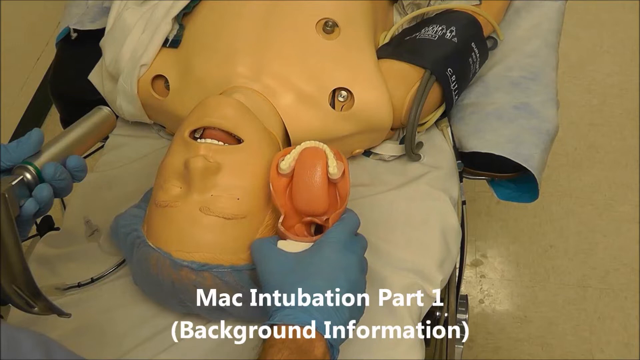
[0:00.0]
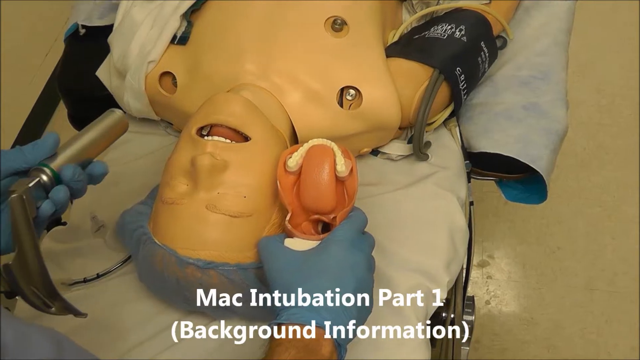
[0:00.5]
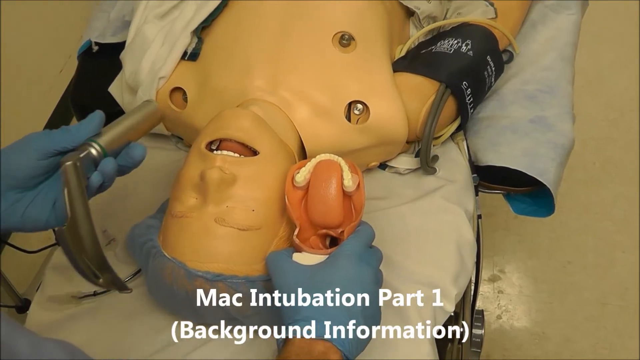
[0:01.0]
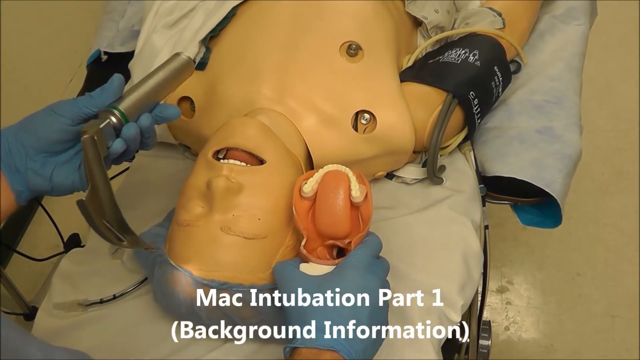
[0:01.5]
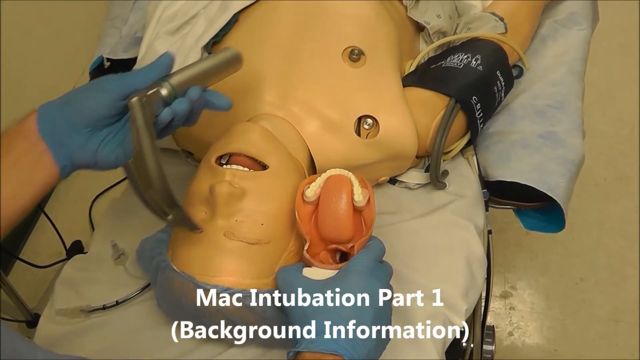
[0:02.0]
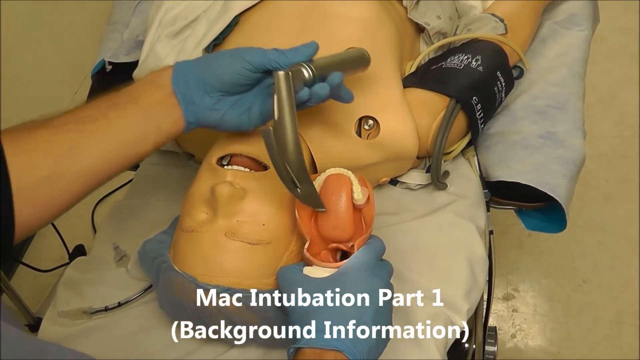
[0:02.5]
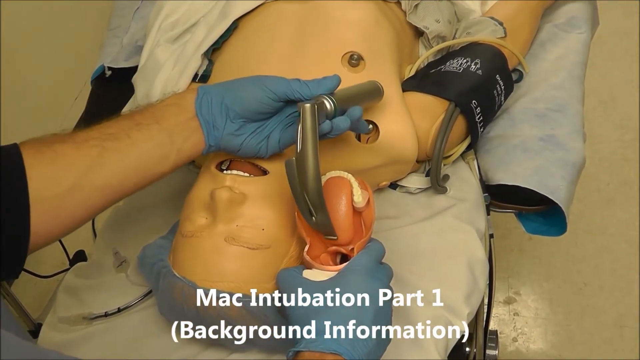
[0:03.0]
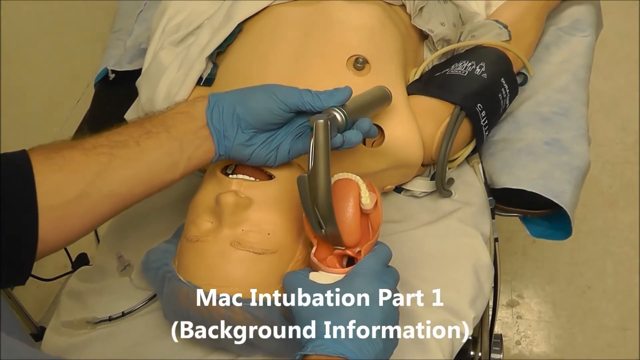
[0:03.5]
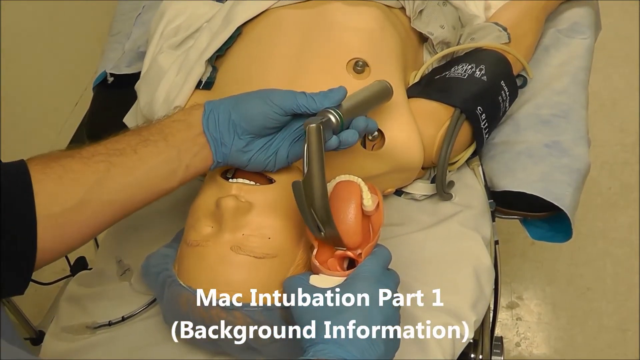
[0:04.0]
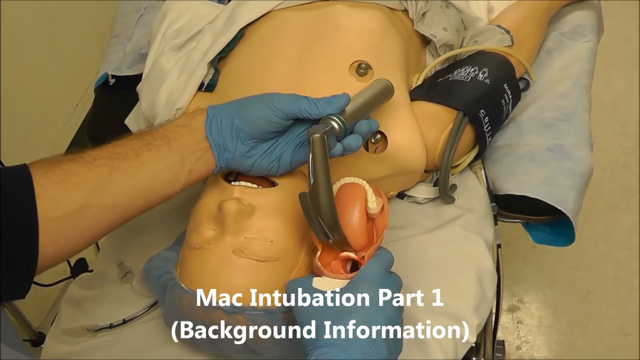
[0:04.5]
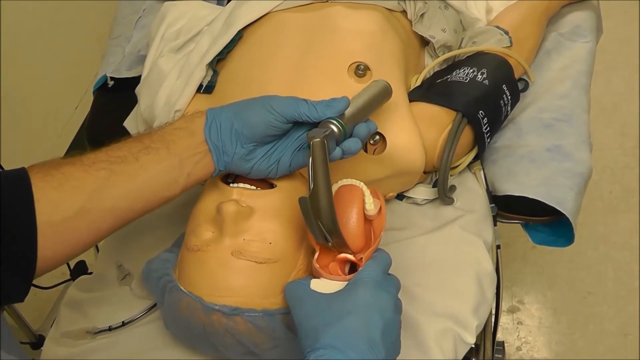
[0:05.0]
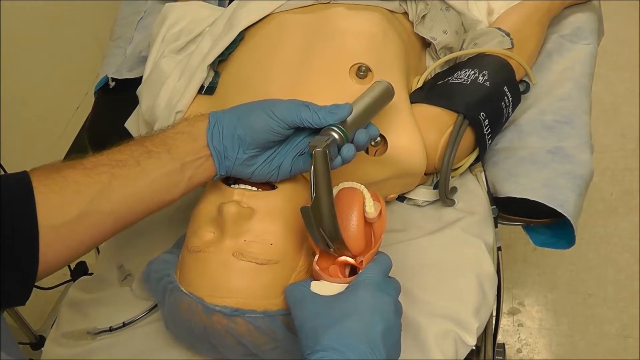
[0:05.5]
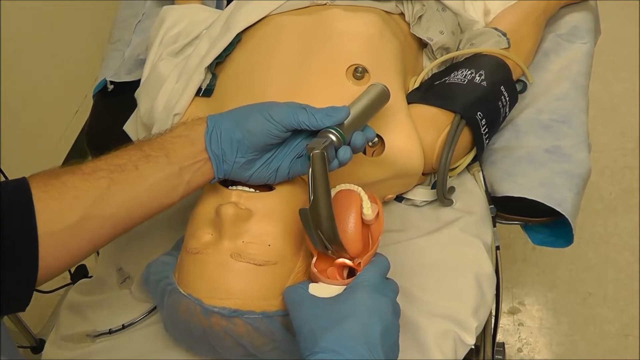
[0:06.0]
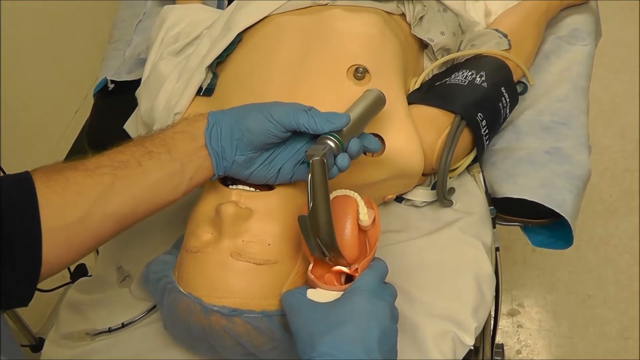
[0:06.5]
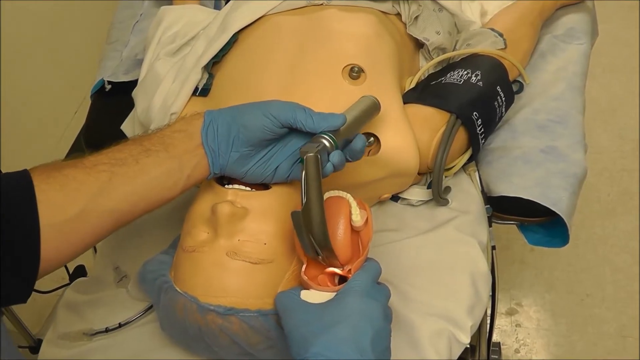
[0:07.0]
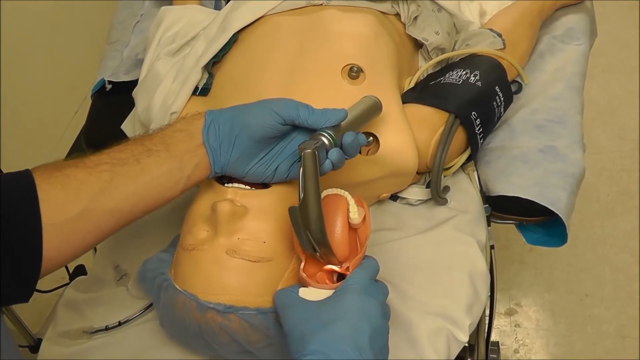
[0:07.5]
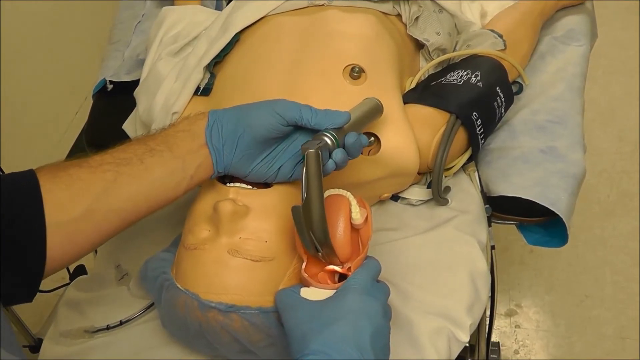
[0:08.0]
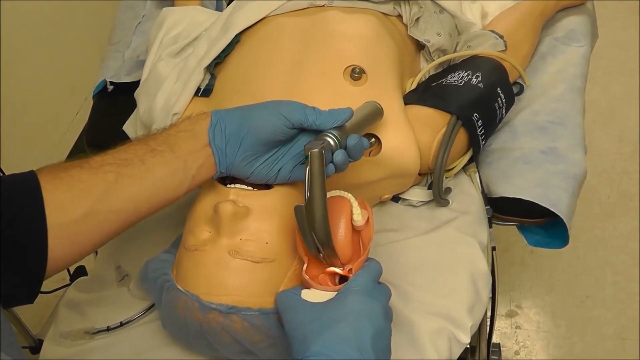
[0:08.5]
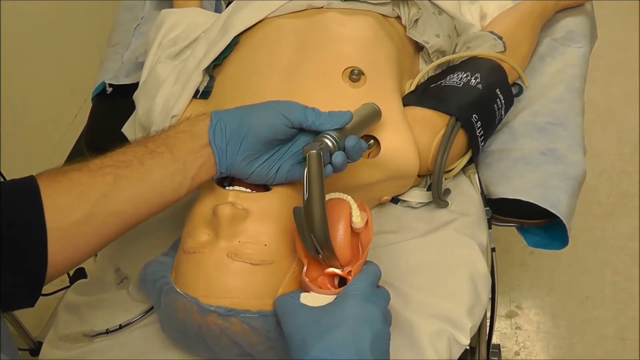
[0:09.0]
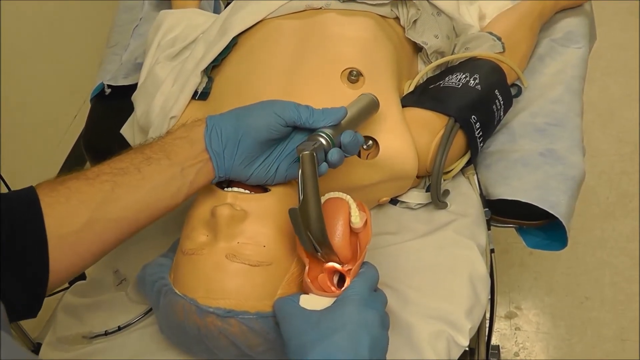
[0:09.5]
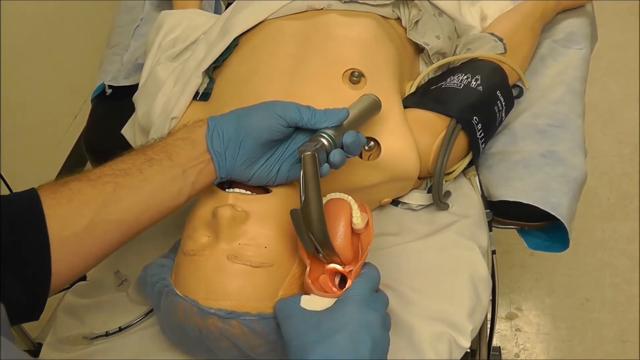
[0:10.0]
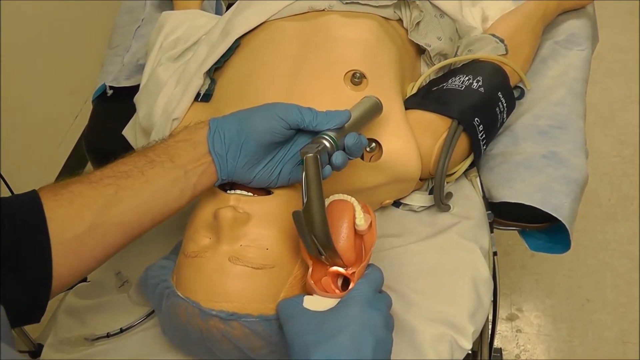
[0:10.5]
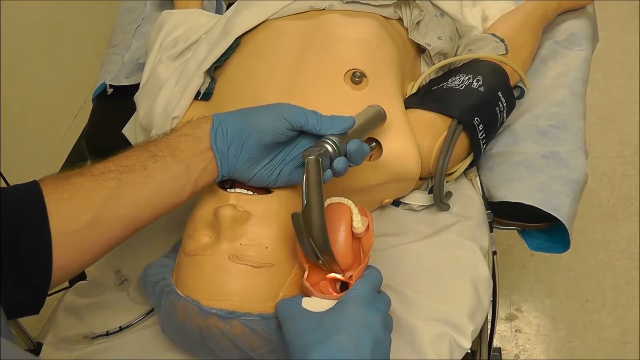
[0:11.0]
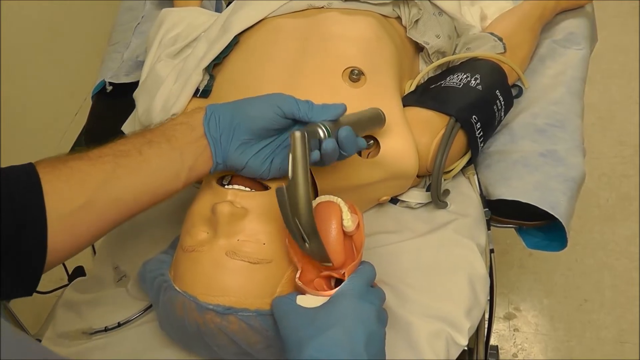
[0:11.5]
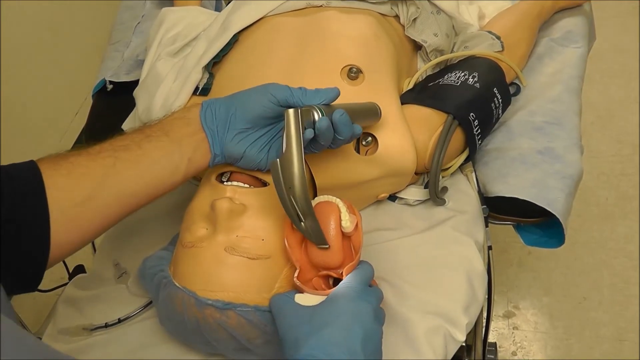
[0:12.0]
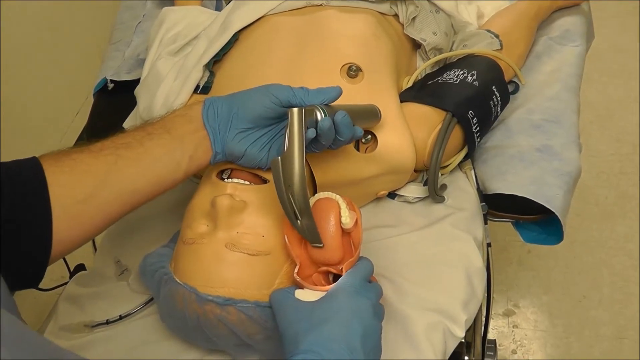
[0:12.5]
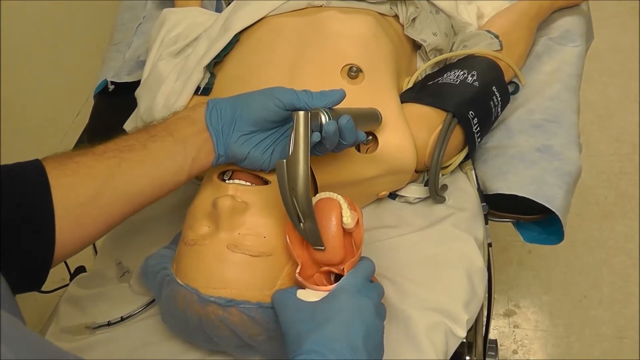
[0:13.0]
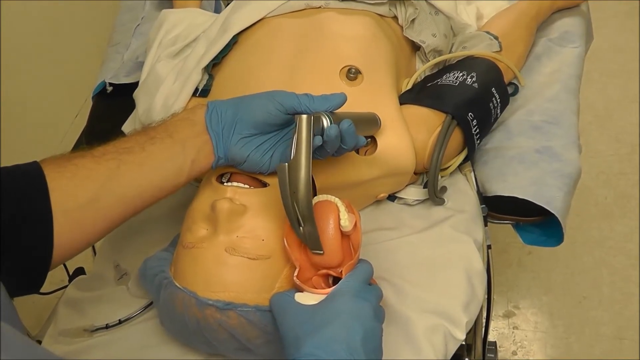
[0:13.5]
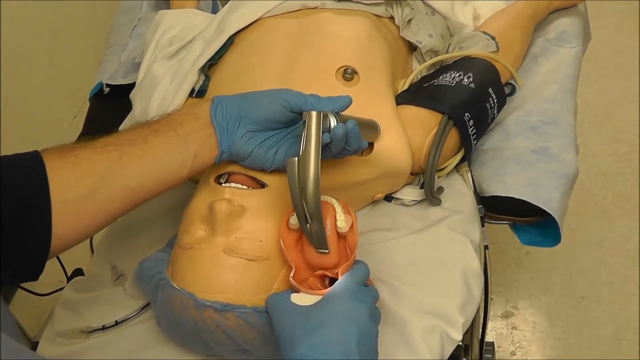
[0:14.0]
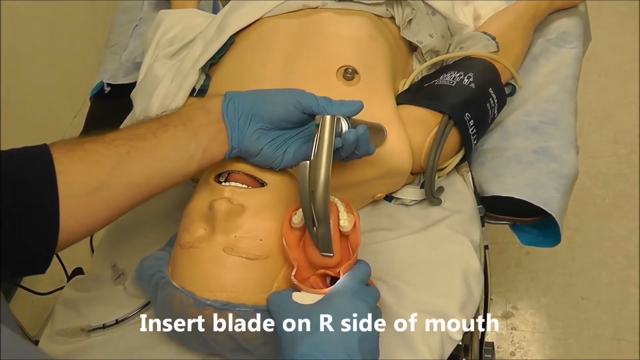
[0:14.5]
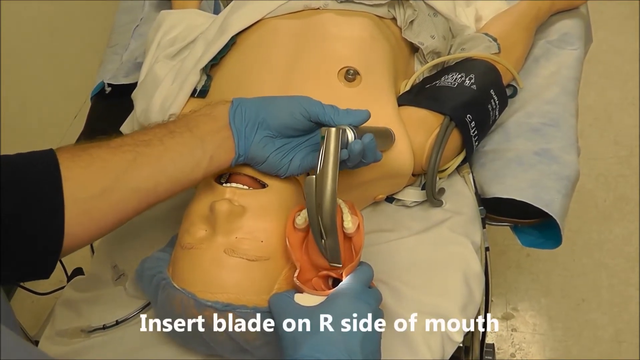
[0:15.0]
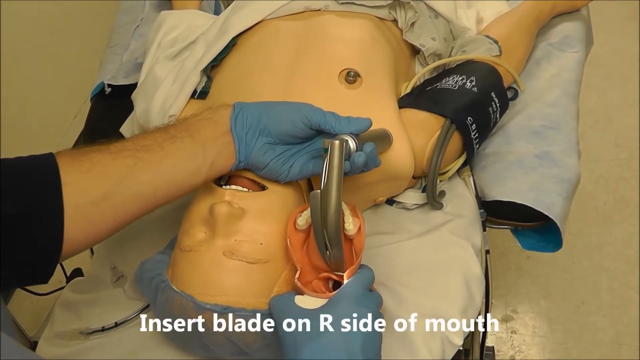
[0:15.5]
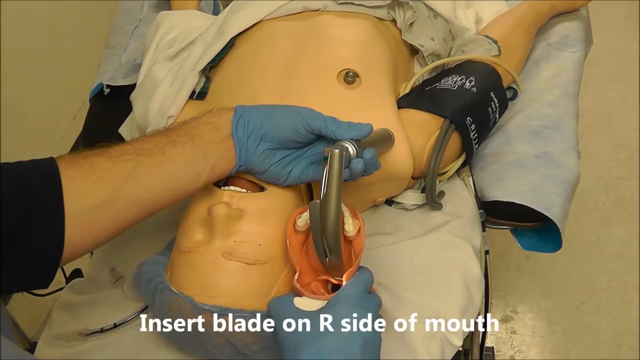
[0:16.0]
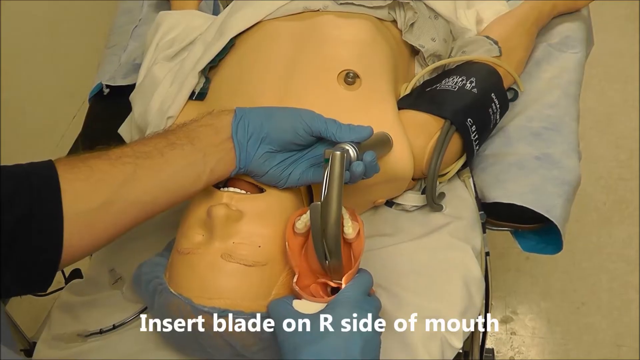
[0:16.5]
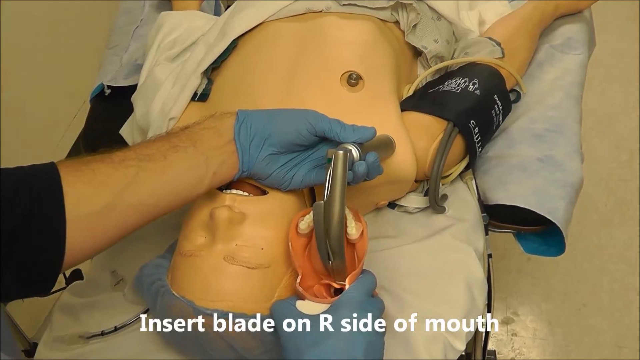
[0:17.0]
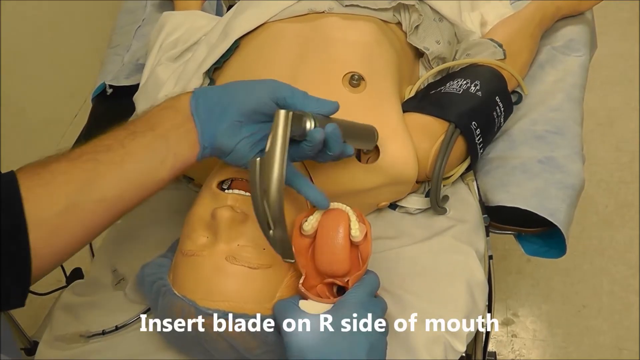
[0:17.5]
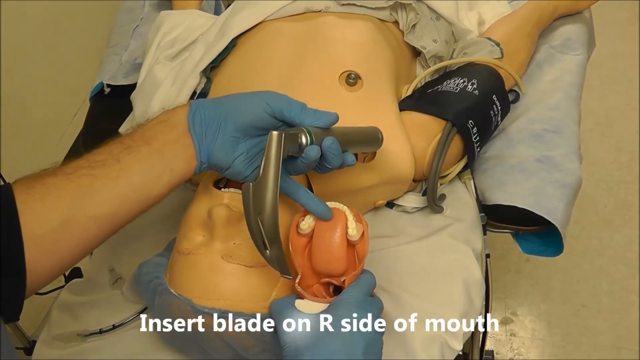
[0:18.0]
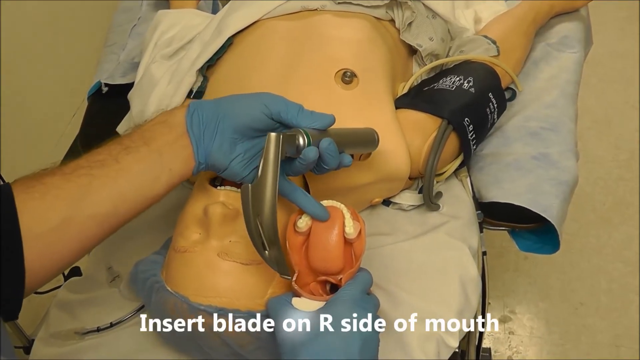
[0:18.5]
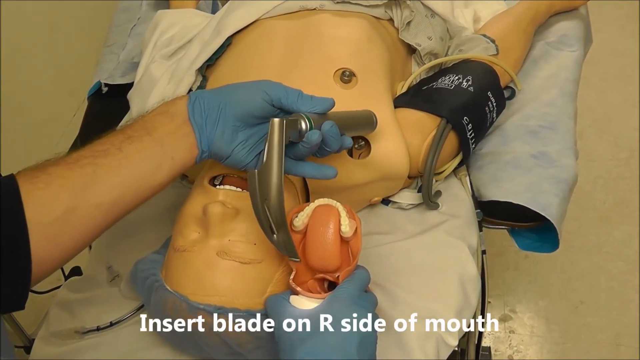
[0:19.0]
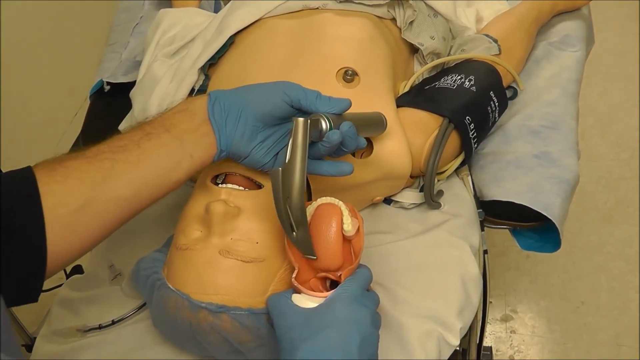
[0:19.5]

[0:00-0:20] A dummy is on a gurney, and text at the bottom of the screen reads "mac intubation part one." The person doing the intubation wears blue gloves and has a model of a mouth, and the video shows an instrument that goes into the mouth. White text at the bottom reads "insert blade on the right side of the mouth." The dummy has one of those blue hospital nets on its head and appears to have a blood pressure cup on. A gray instrument is stuck into the right side of the mouth. The dummy wears what looks like a white shirt, partially on and partially off, and there are two holes on the side of its chest.